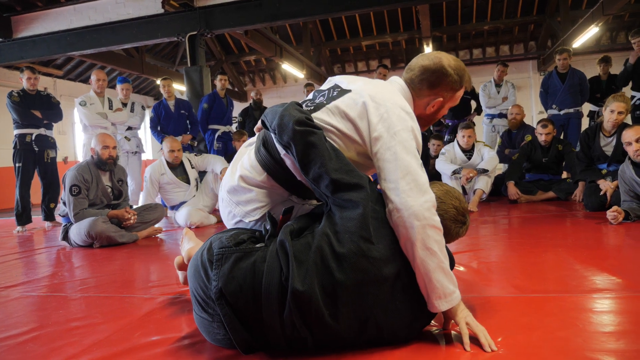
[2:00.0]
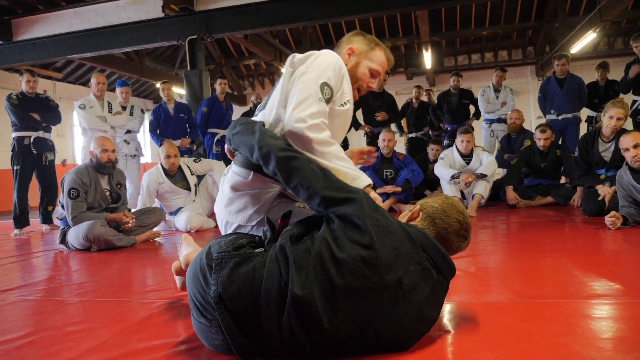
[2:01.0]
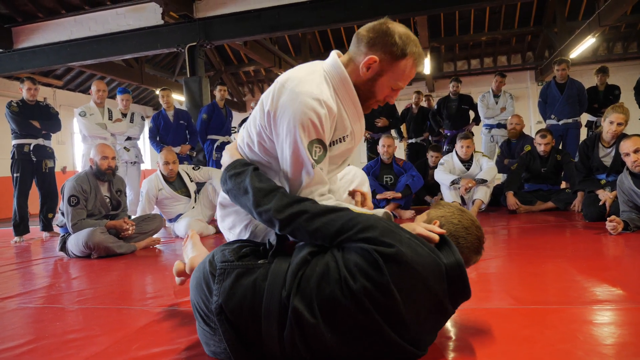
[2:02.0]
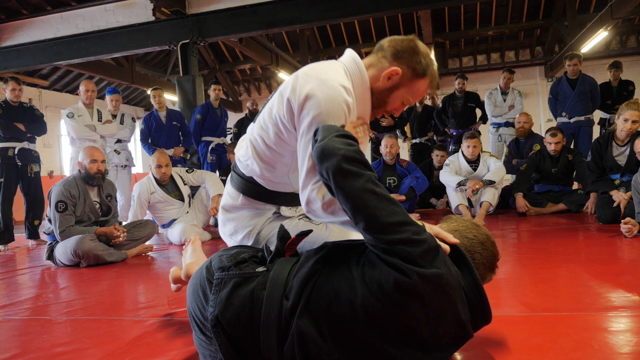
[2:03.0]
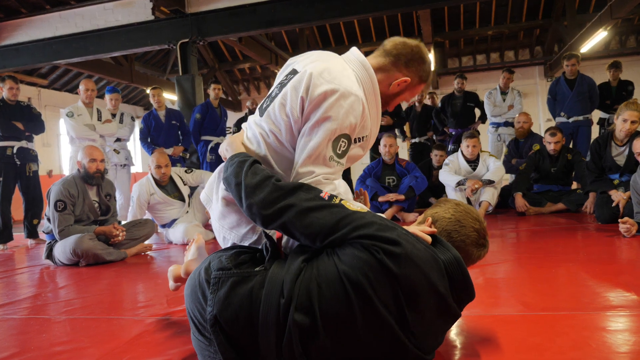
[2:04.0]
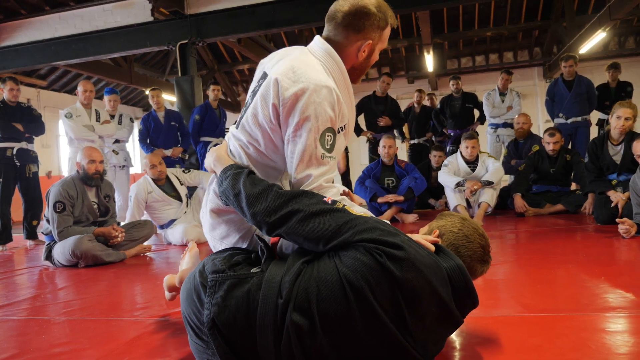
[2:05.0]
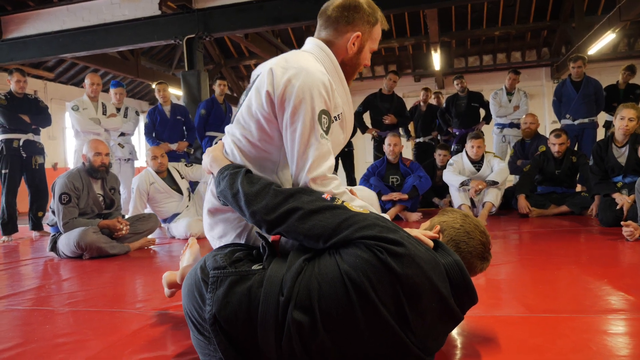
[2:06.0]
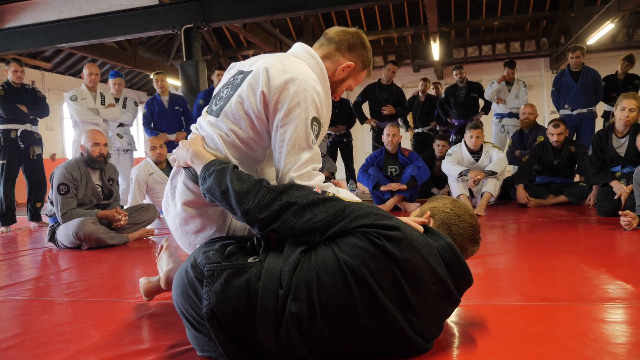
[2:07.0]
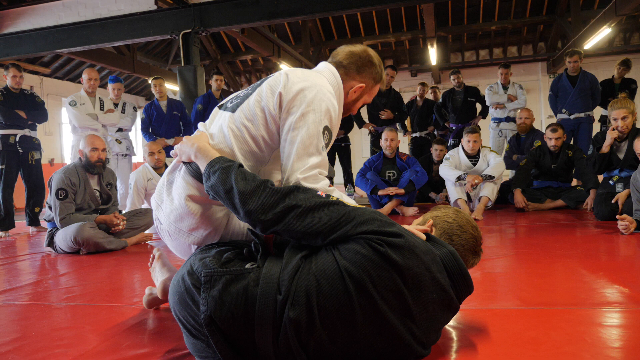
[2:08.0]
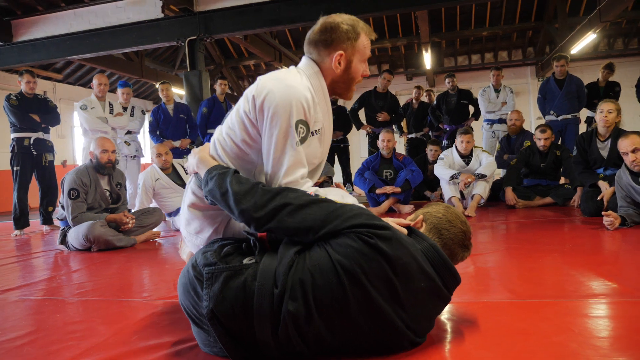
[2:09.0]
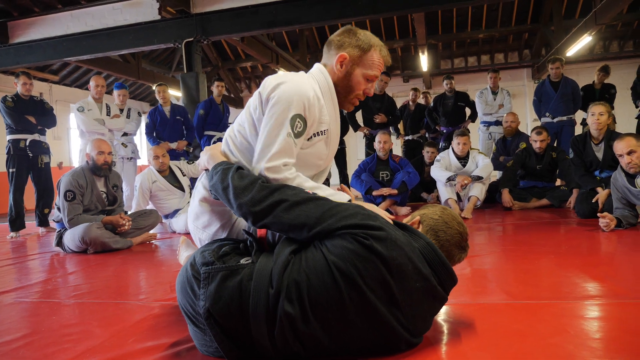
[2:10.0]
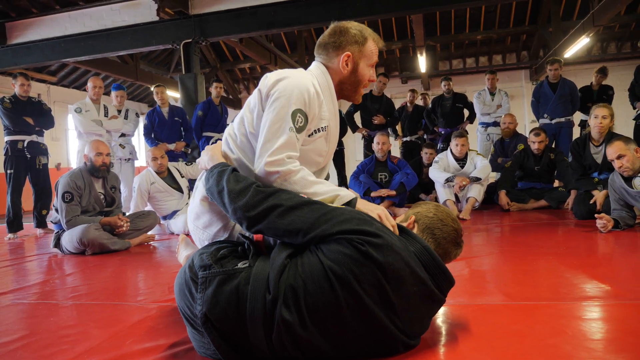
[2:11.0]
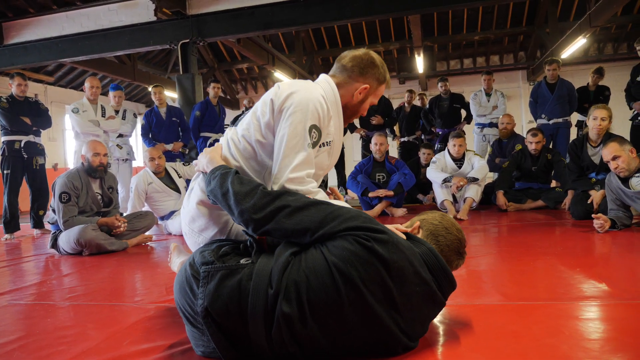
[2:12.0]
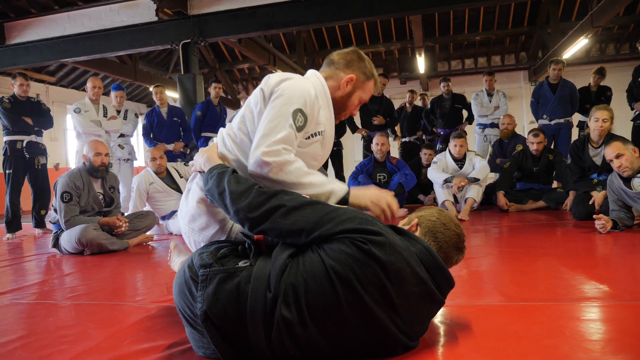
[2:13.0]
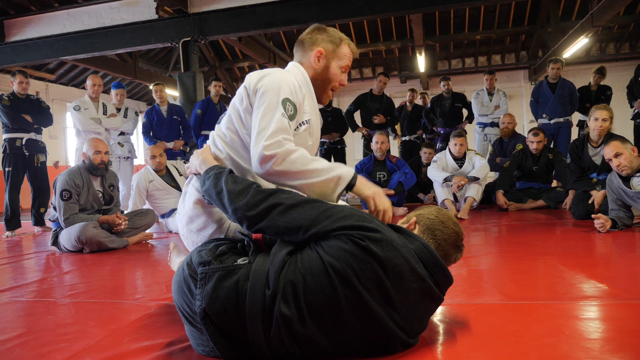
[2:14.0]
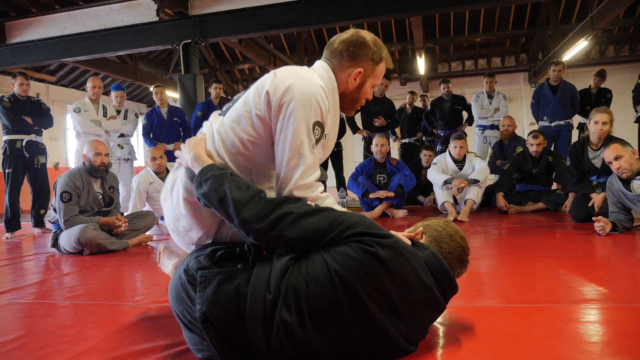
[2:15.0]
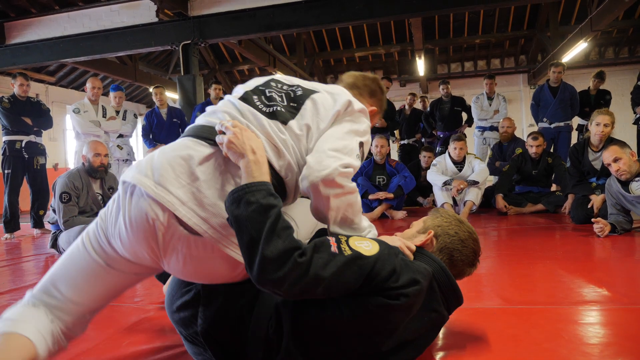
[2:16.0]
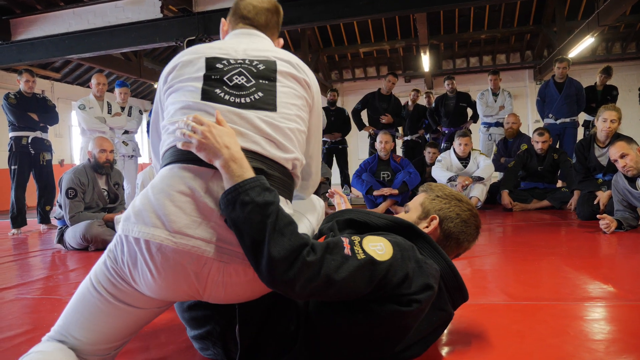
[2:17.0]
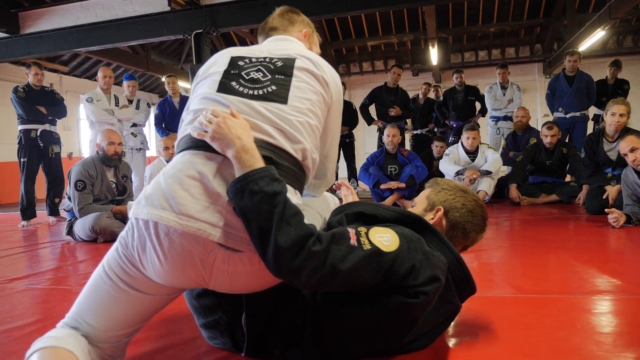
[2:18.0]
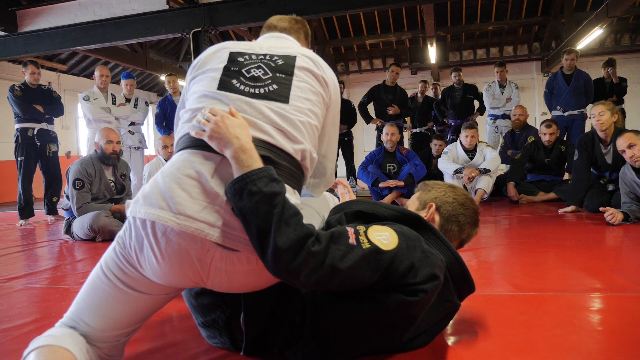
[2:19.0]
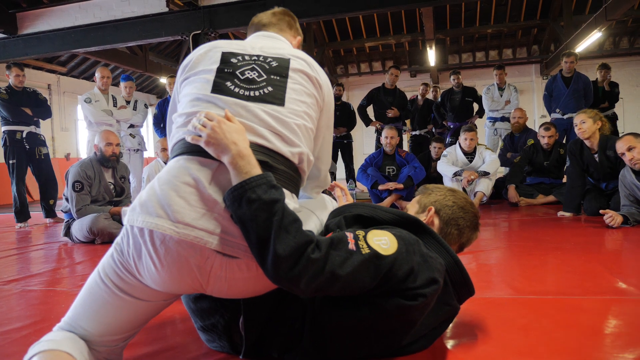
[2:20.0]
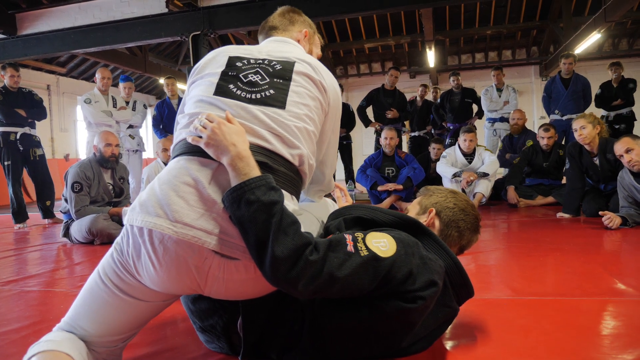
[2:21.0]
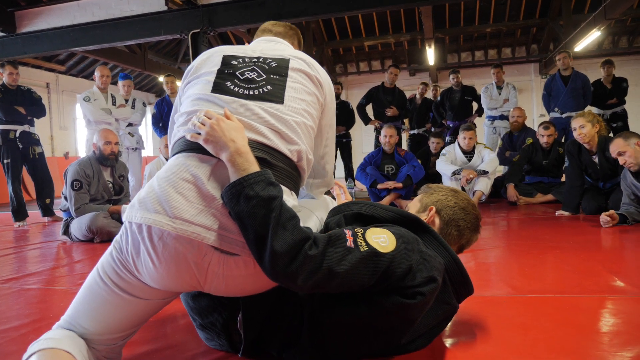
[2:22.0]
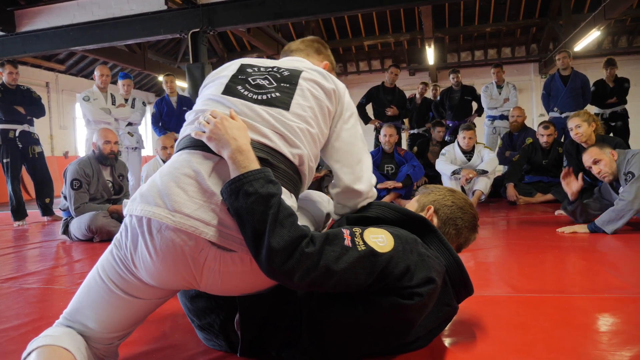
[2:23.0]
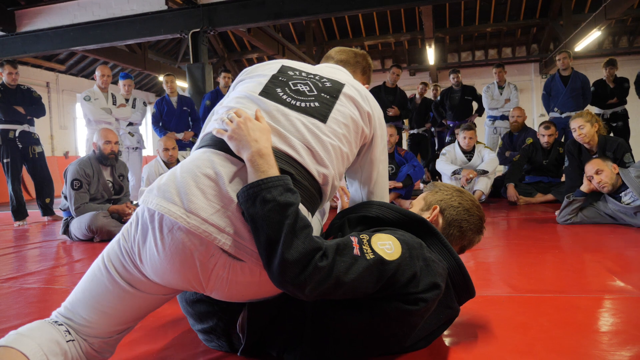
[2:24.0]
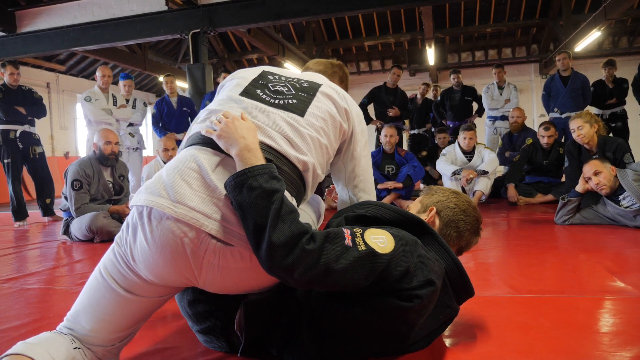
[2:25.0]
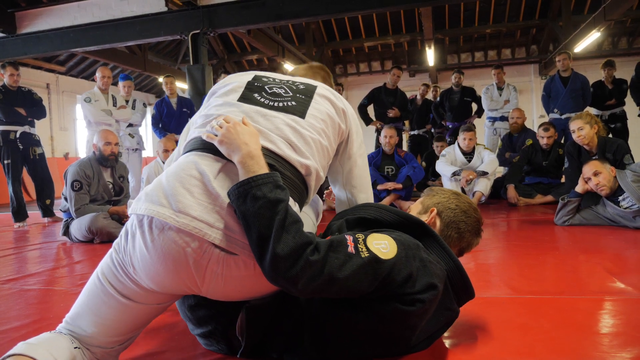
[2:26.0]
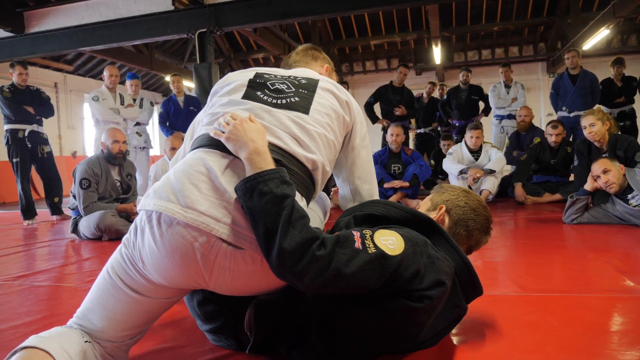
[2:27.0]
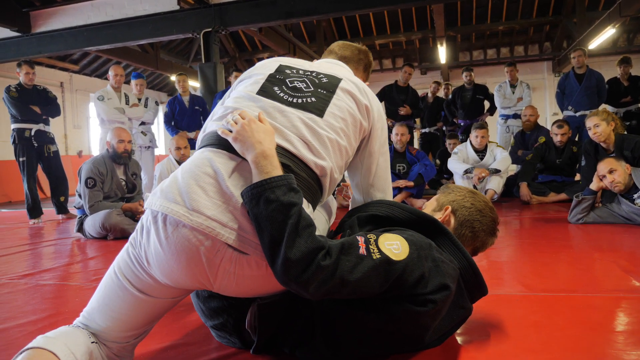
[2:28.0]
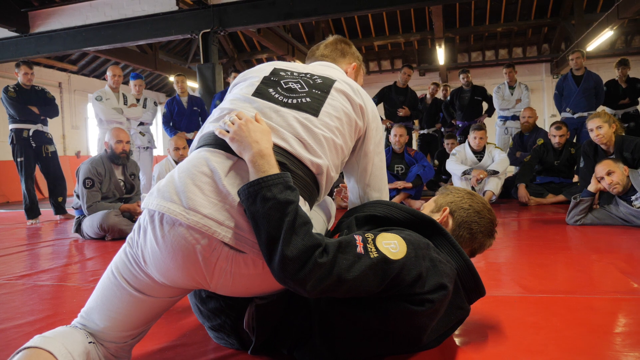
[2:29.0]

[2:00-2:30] The man on top in white grabs his collar with his right hand for a moment and kind of tugs on it, while with his other hand he gestures at the room, instructing the rest of the class. At one point he points toward the students and then points back with his thumb, as if giving directional advice. He brings his left leg back around to kind of sit more on the man. He is seen mostly from the back, his head always moving as he instructs. The rest of the class hardly moves; some sit cross-legged and some stand at the back, all watching intently. They are mostly men, with a few women watching as well.